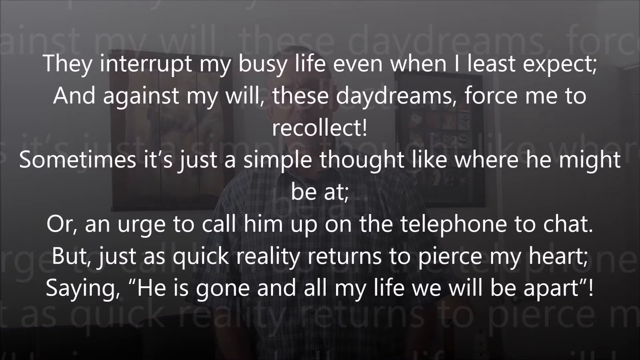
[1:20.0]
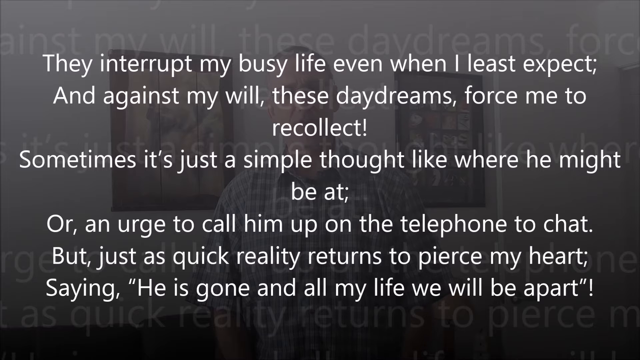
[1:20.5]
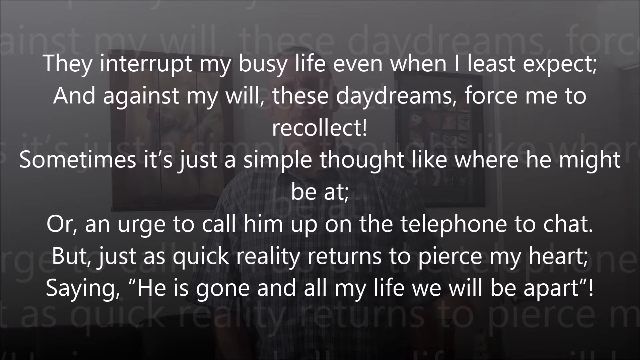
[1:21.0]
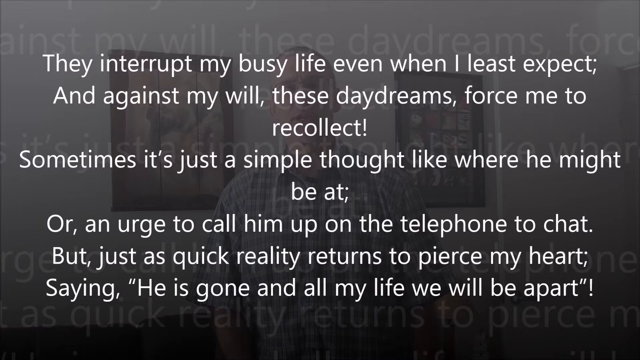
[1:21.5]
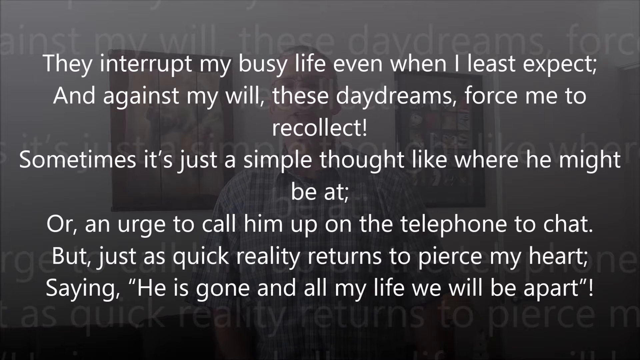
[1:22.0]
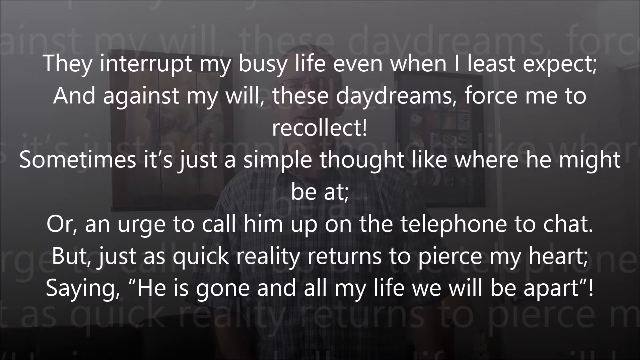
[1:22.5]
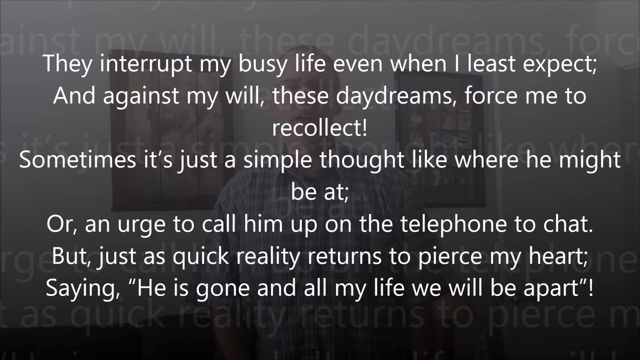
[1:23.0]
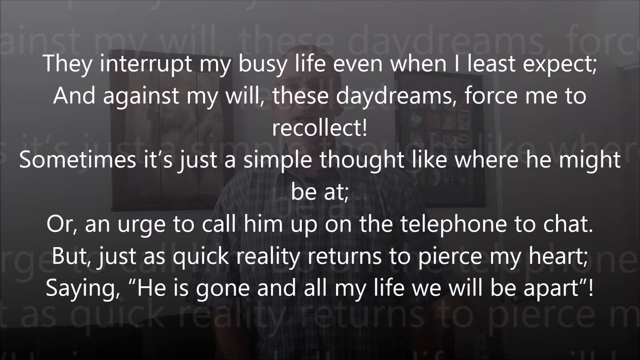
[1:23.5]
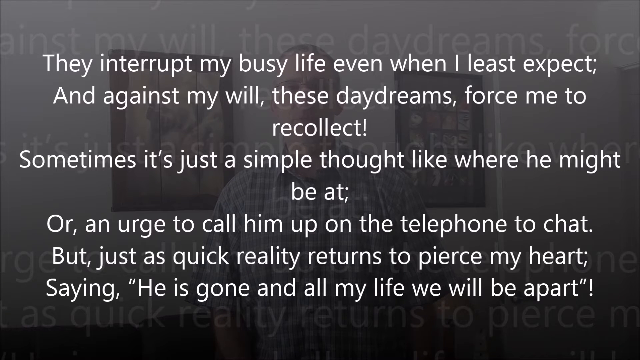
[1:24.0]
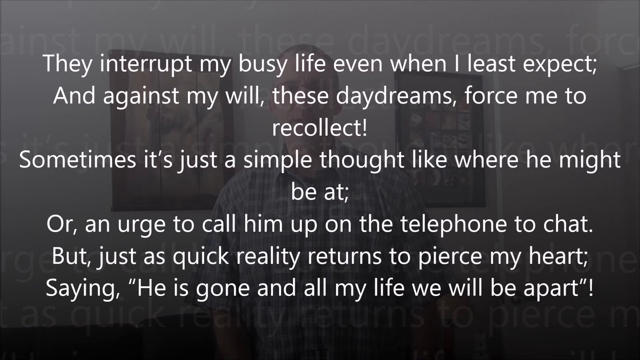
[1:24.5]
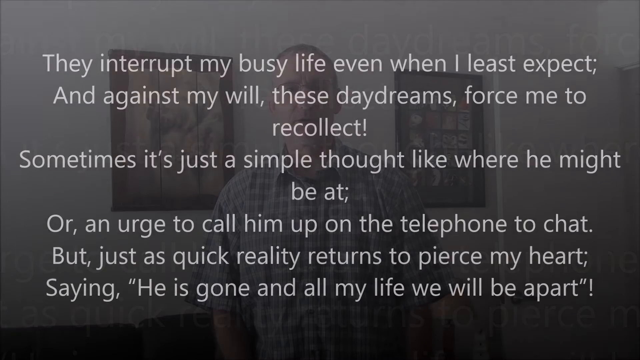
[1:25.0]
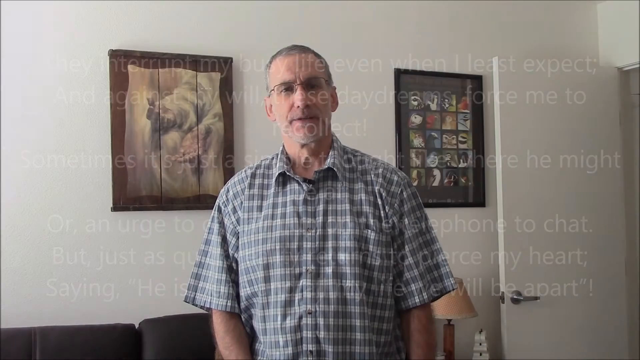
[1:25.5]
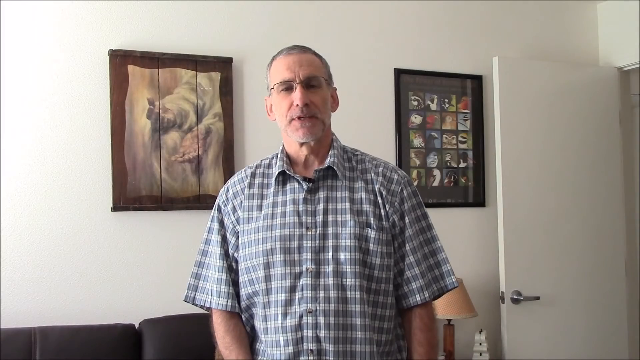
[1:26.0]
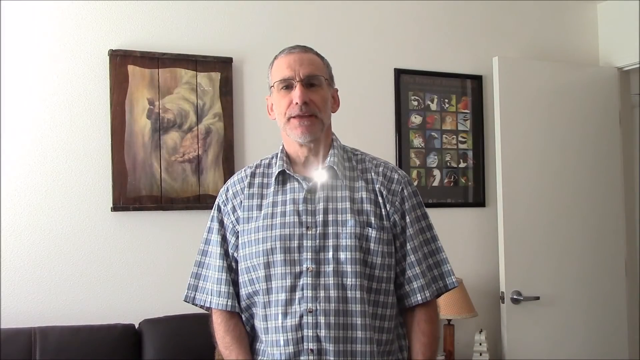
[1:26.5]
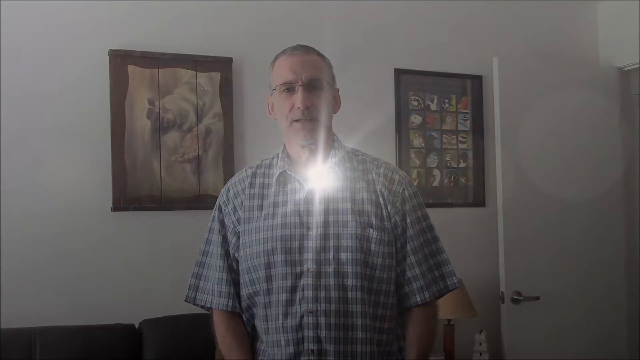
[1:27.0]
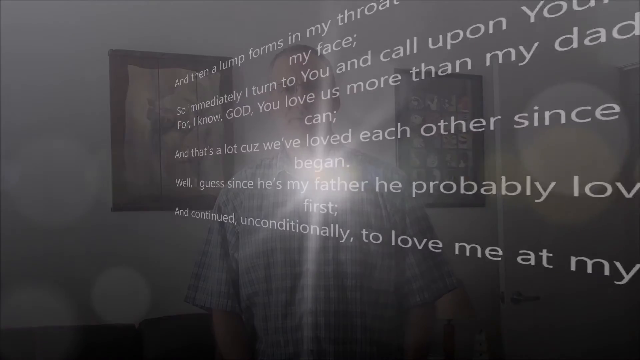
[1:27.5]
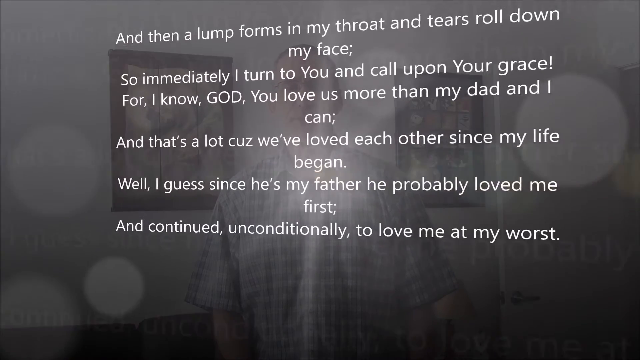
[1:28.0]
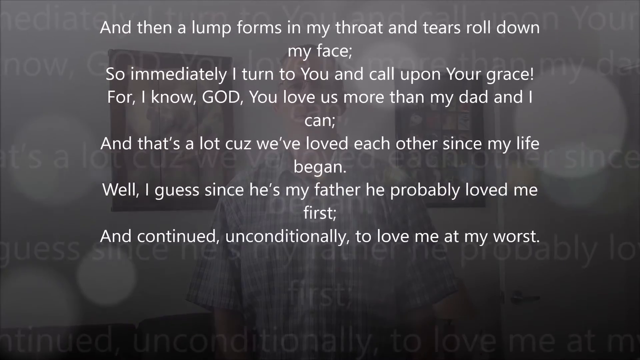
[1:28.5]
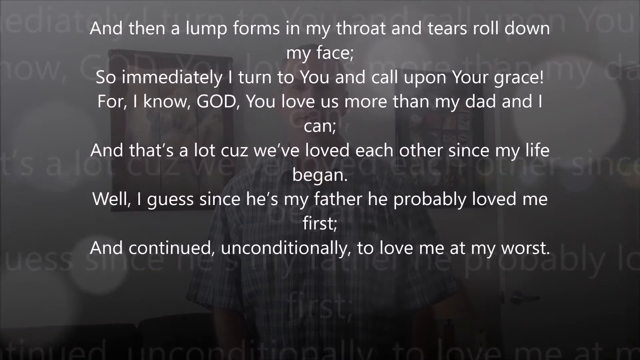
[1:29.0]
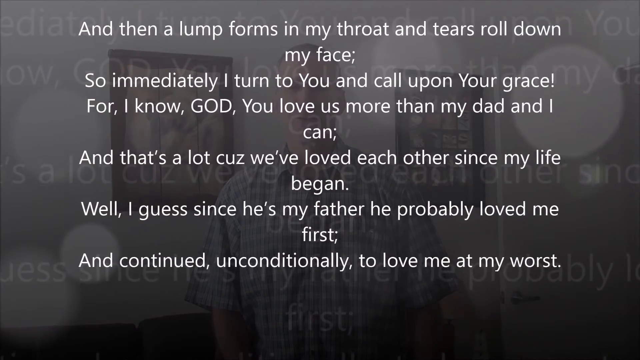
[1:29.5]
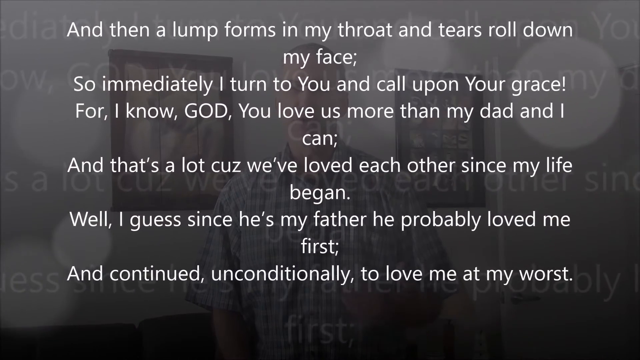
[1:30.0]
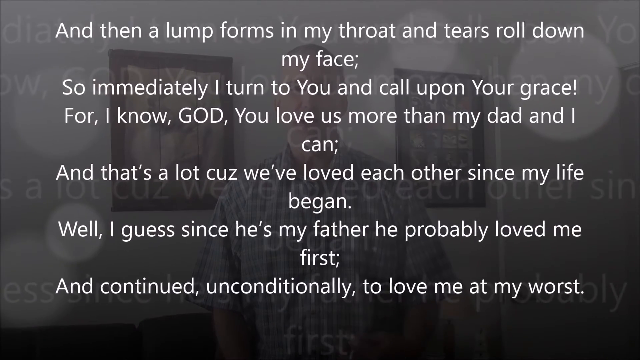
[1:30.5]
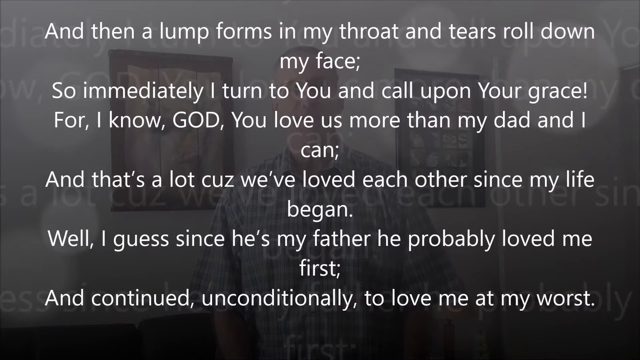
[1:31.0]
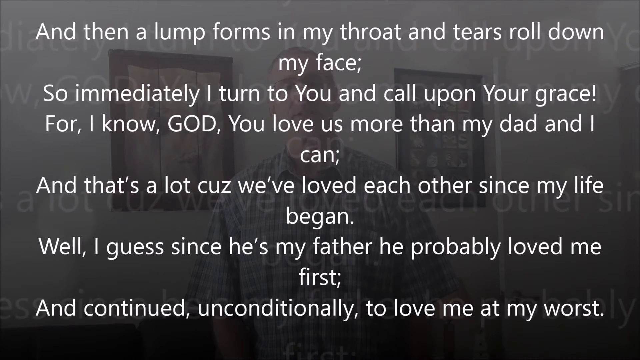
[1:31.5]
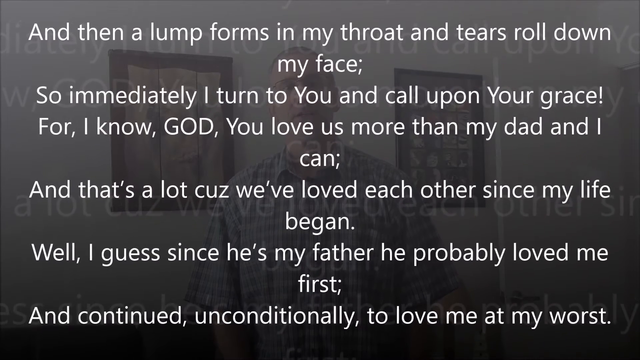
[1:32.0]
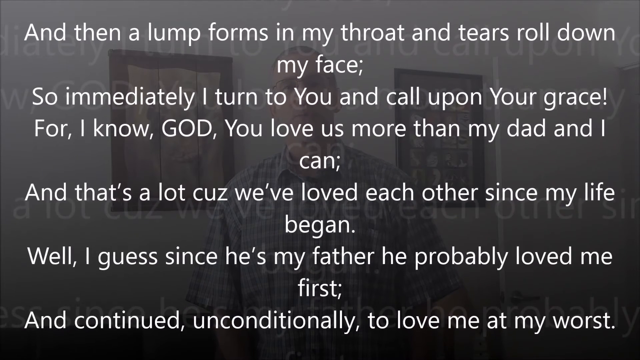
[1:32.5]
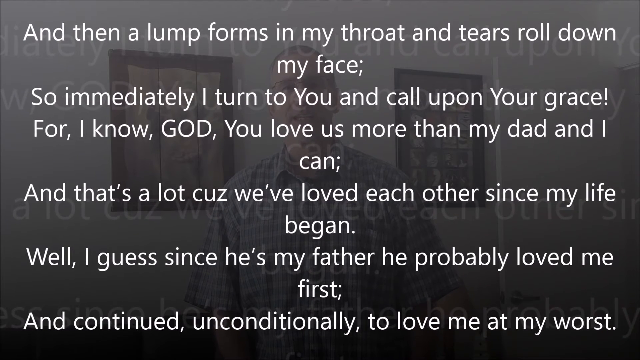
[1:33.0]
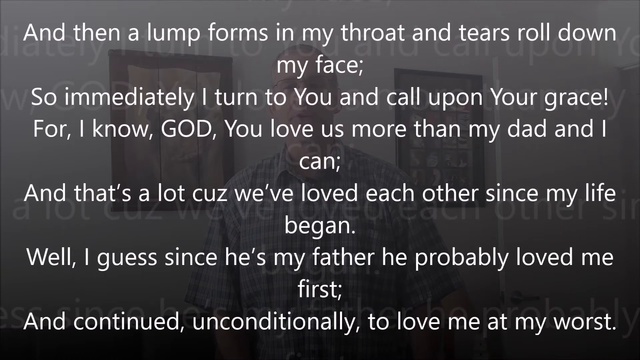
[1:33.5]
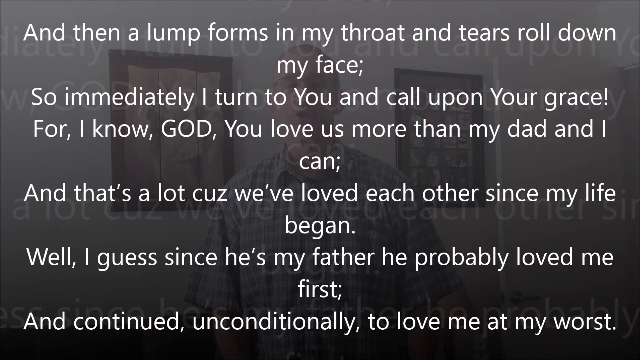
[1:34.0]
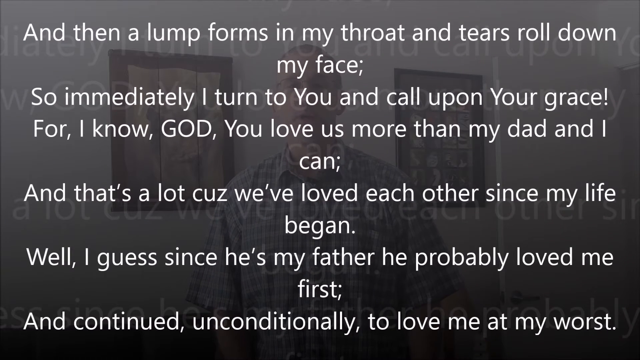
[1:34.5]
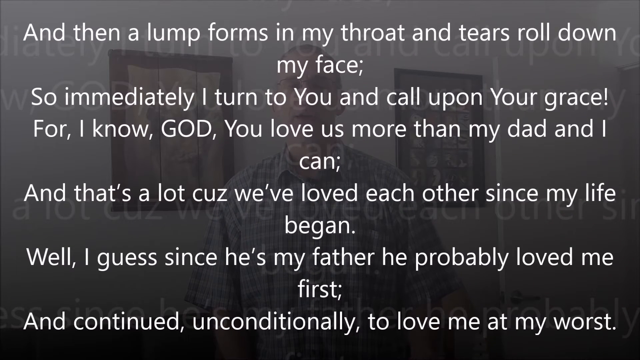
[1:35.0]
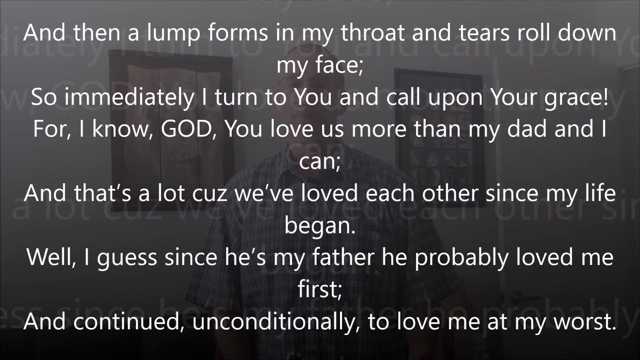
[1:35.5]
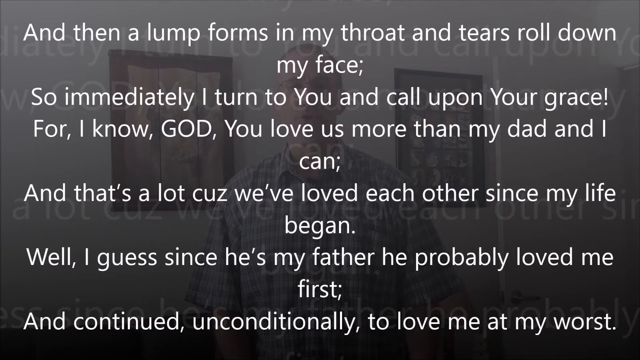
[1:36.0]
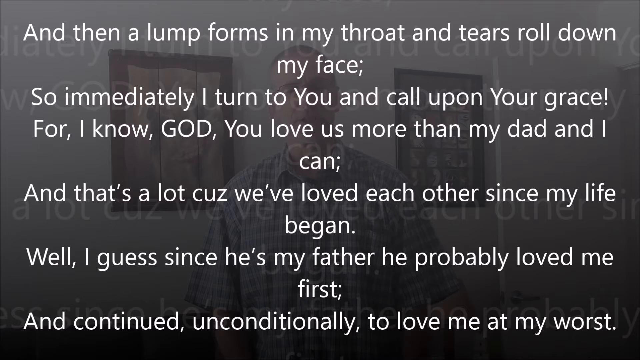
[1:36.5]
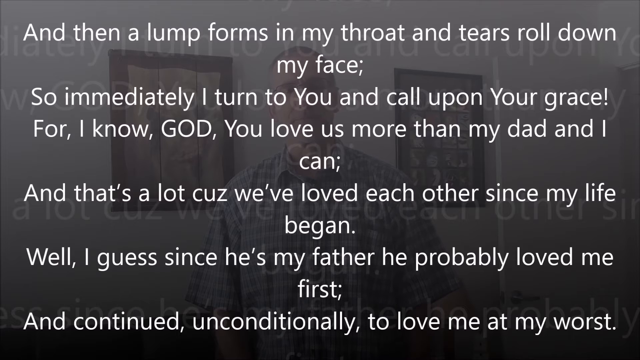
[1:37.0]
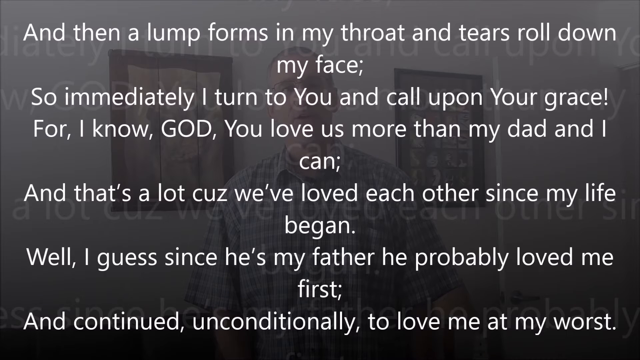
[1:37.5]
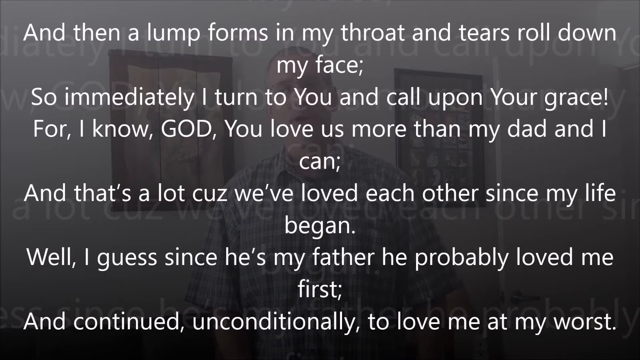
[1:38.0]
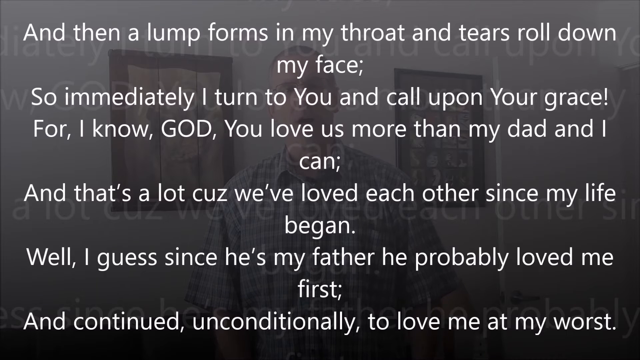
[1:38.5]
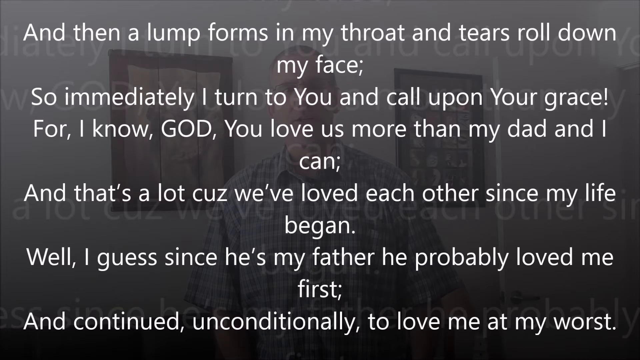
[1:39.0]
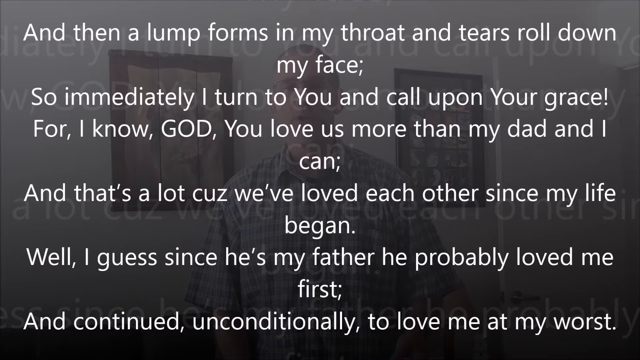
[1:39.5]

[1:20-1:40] The poem stays on the screen for about five seconds, then the video briefly cuts back to the elderly man in the gray shirt standing in the white room. Another light comes across the center of the video, and it transforms into another poem, which reads, "Then a lump forms in my throat and tears roll down my face. So immediately I turn to you and call upon your grace. For I know God, you love us more than my dad and I can. And that's a lot because we've loved each other since my life began. Well, I guess since he's my father, he probably loved me first and continued unconditionally to love me at my worst."